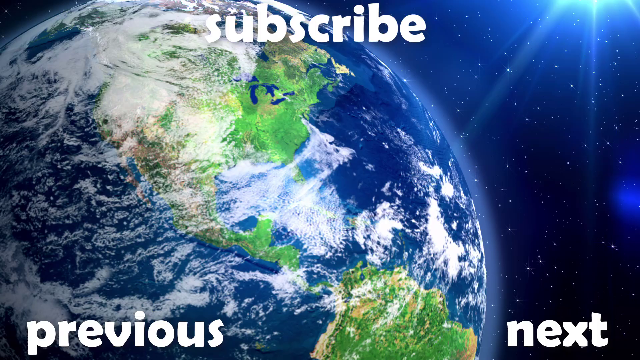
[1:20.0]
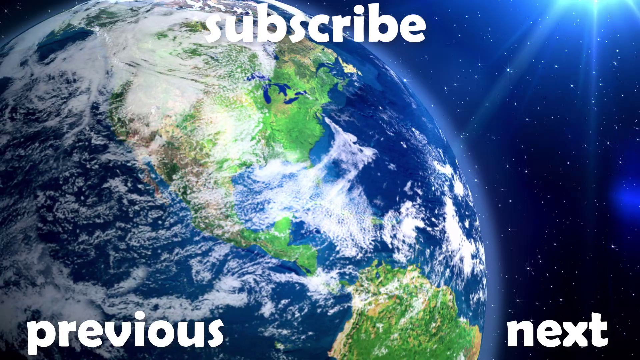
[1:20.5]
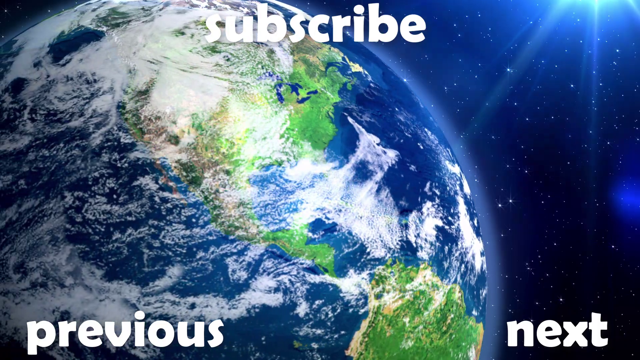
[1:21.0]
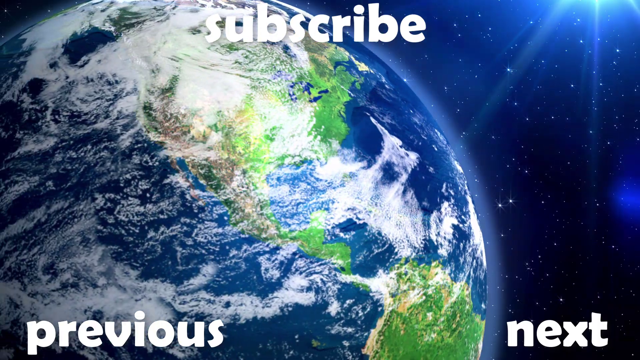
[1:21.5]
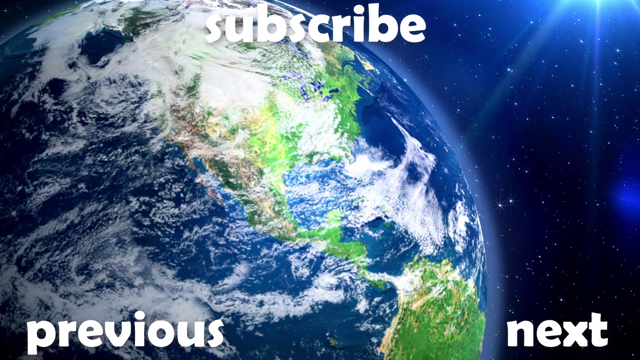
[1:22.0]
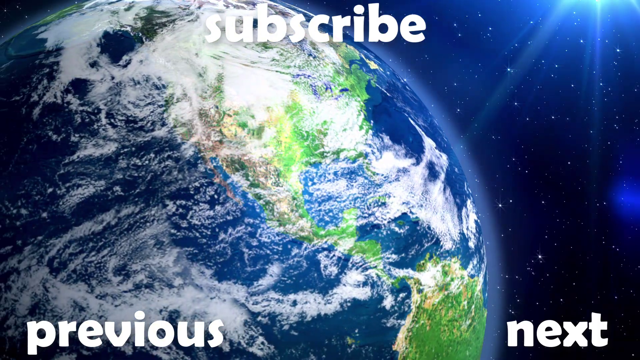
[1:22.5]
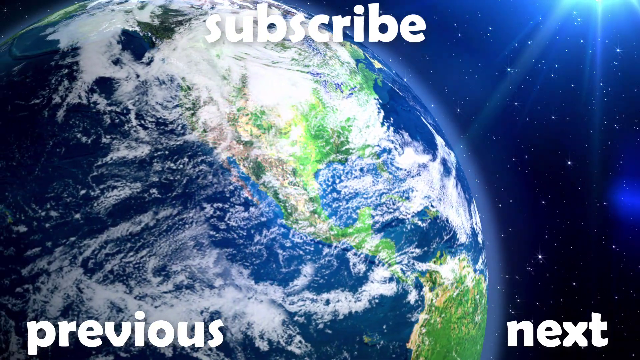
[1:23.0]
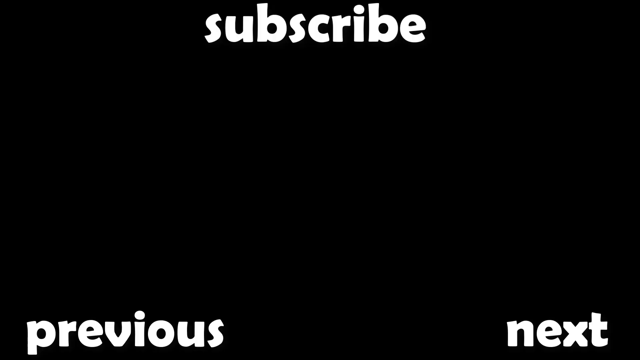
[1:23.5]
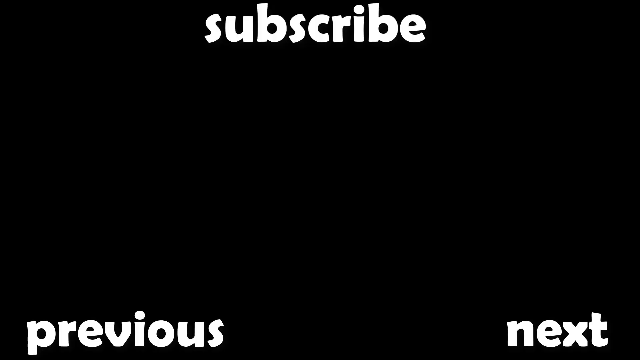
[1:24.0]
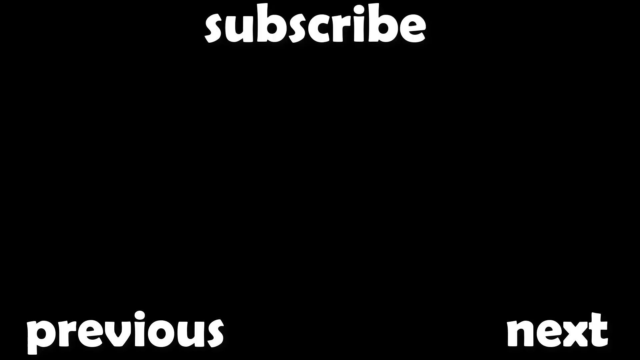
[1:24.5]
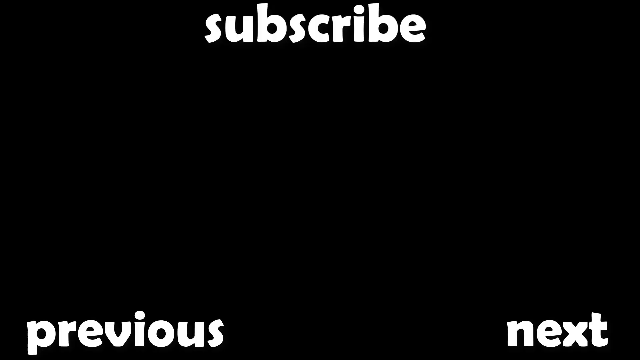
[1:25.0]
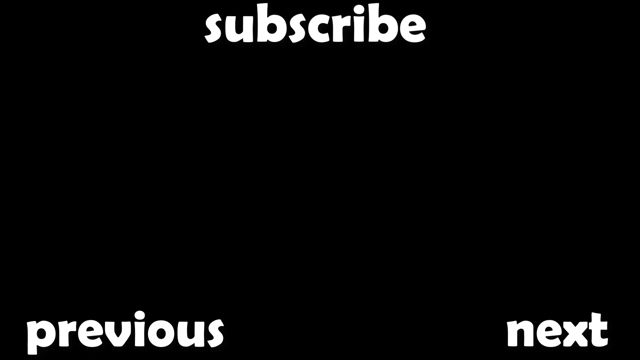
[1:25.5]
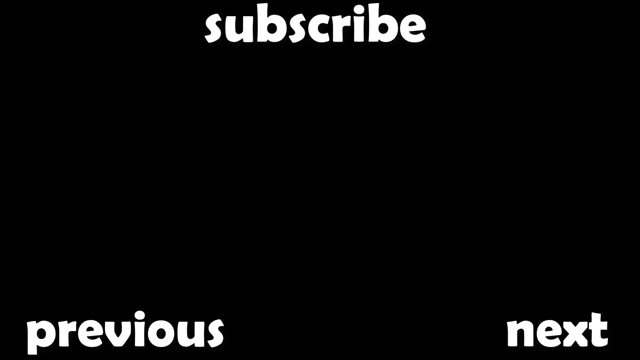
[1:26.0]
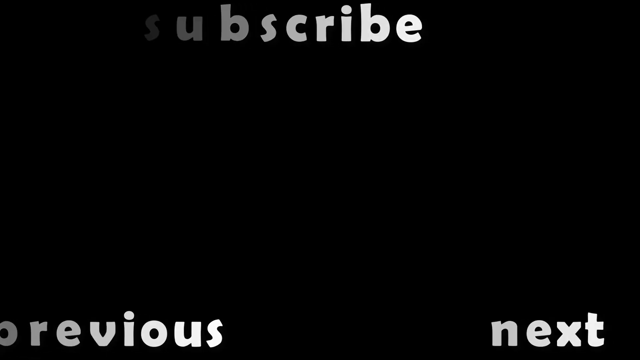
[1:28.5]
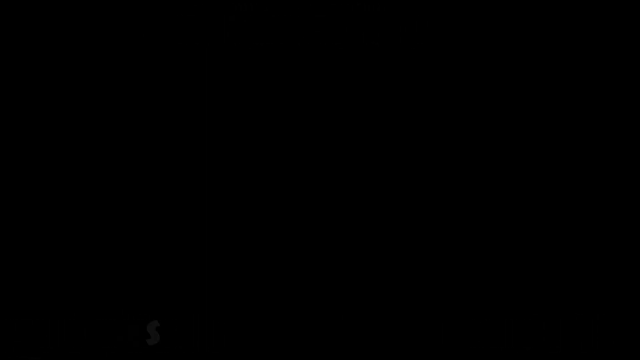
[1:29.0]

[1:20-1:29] A spinning globe is set against a background that looks like space: dark blue with white points of light that look like stars. The globe is very detailed, with the continents sort of visible in green and a white cloud cover above them that is also spinning, sort of independently from the continents, so the clouds move over the continents. The white word "subscribe" appears. The background then turns black and the planet disappears, leaving only the white word "subscribe" at the top, with the word "previous" at the bottom left and "next" at the bottom right of the screen.